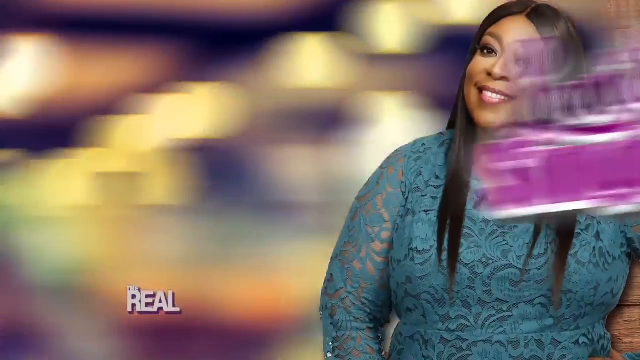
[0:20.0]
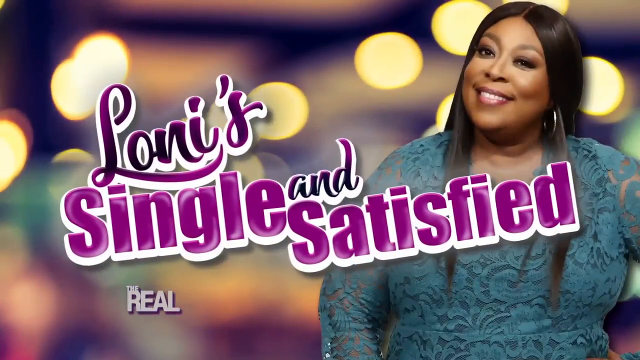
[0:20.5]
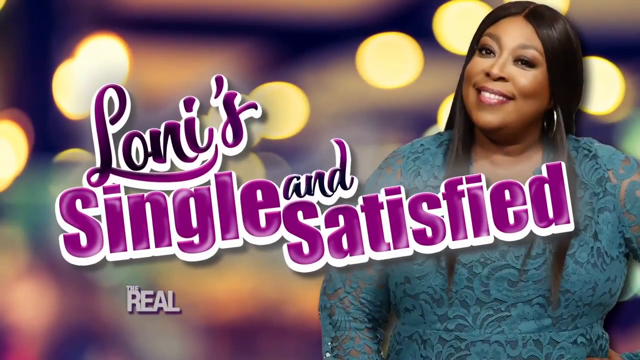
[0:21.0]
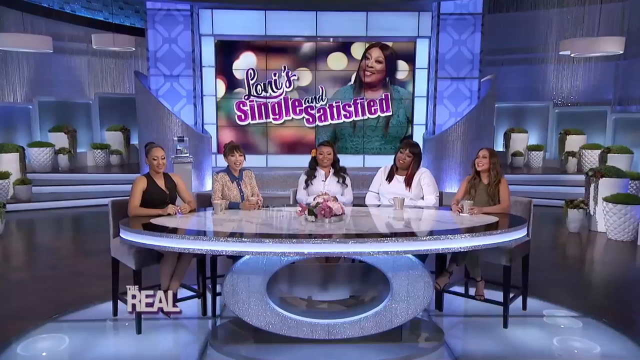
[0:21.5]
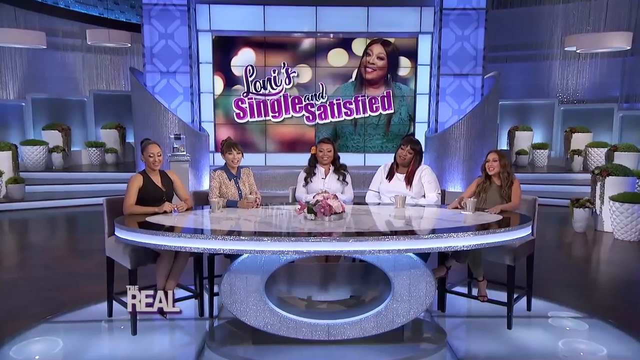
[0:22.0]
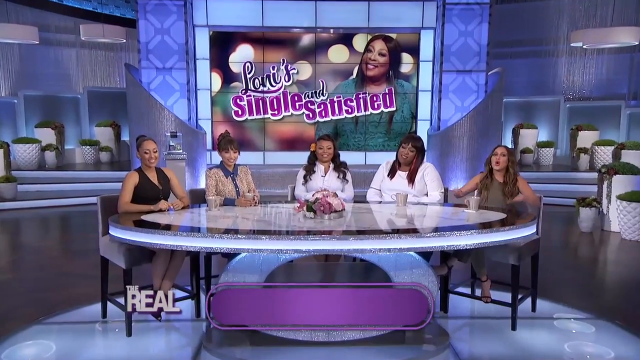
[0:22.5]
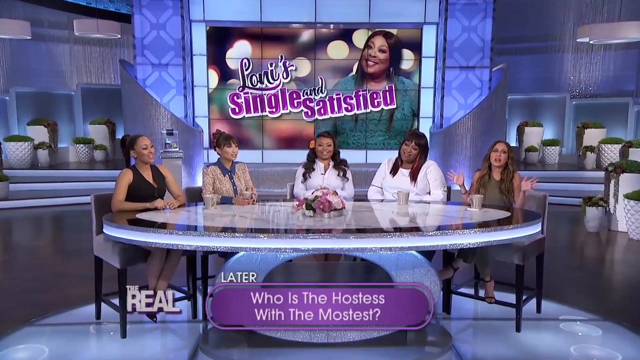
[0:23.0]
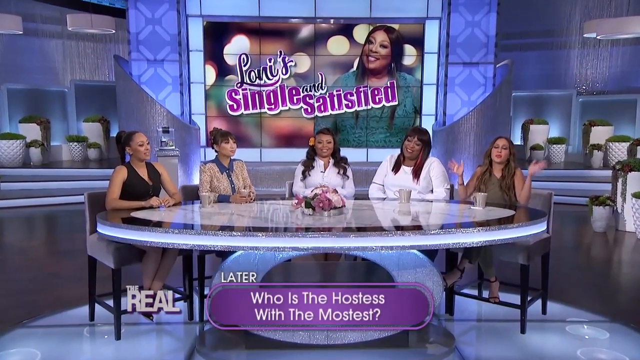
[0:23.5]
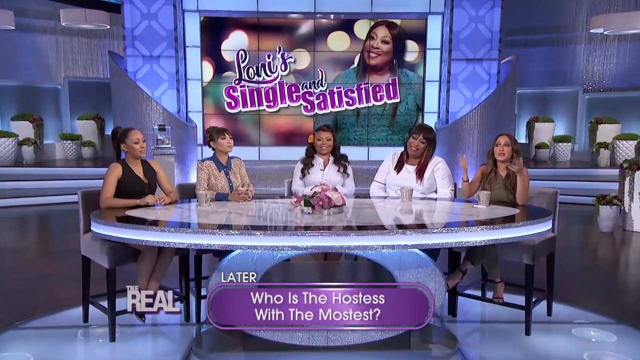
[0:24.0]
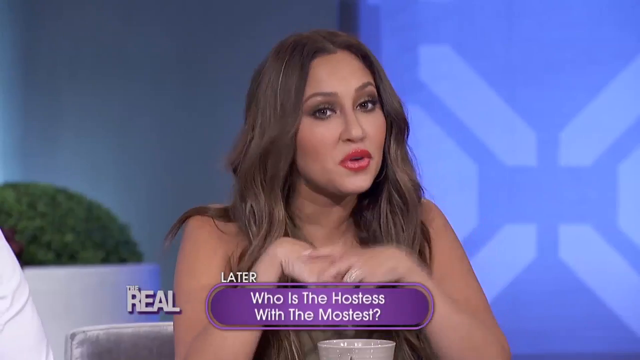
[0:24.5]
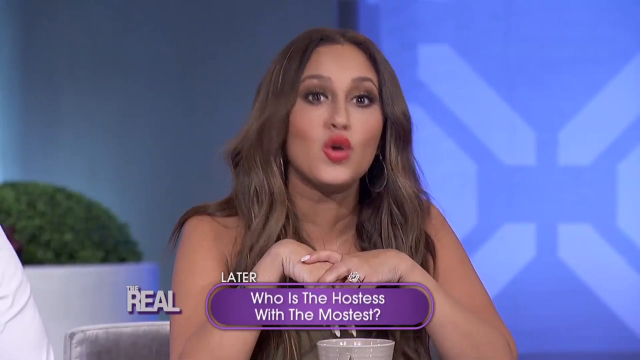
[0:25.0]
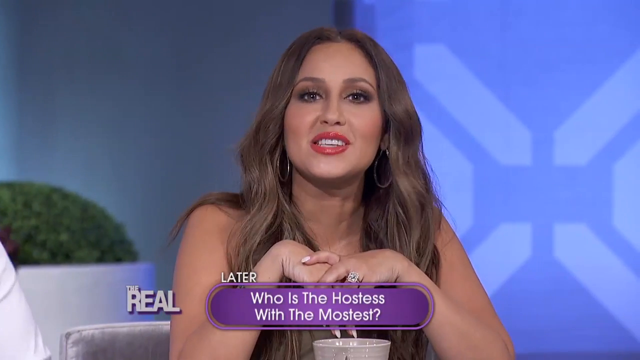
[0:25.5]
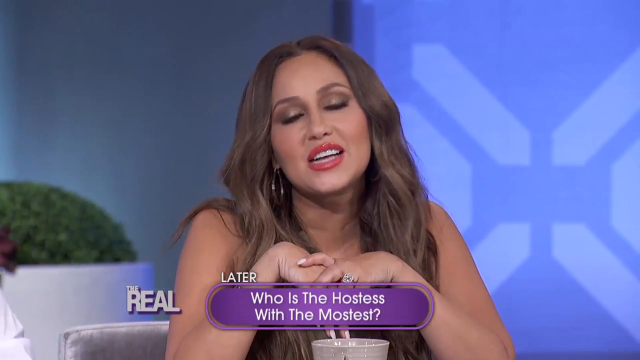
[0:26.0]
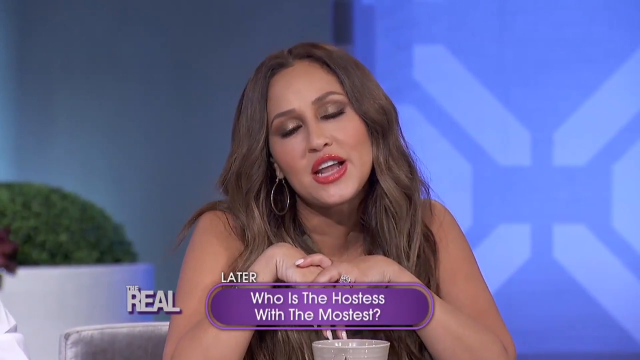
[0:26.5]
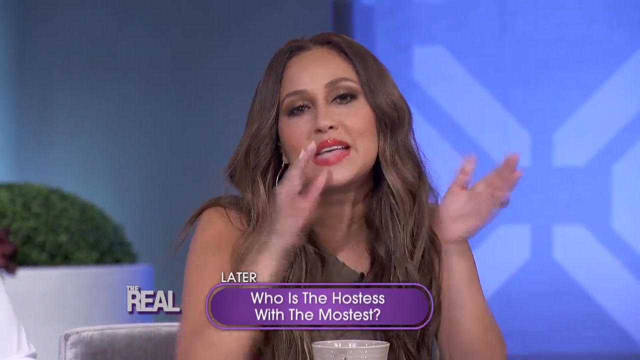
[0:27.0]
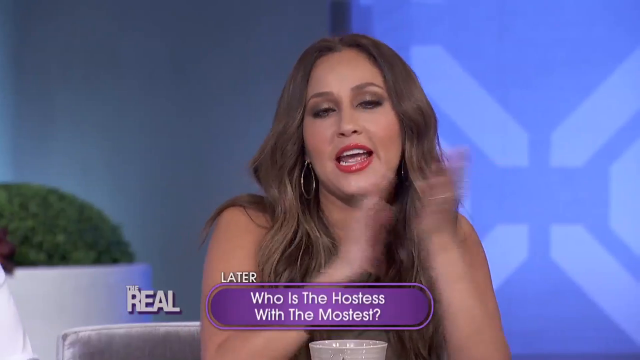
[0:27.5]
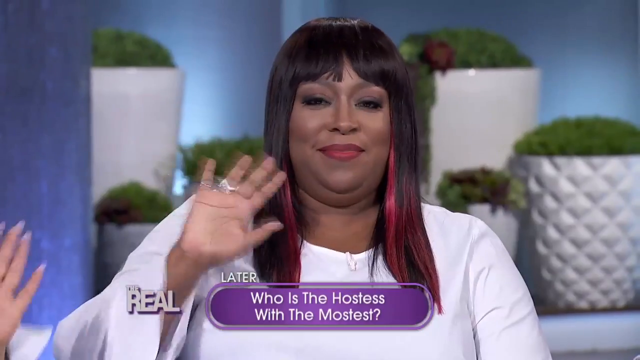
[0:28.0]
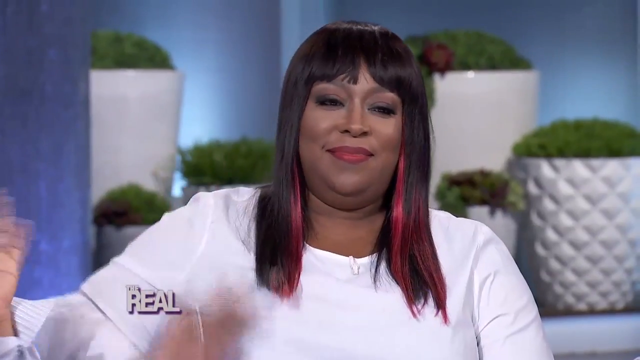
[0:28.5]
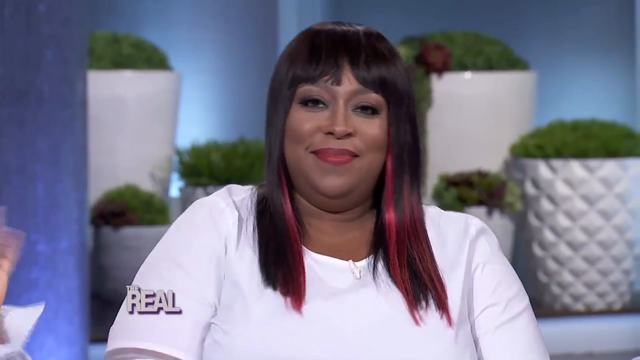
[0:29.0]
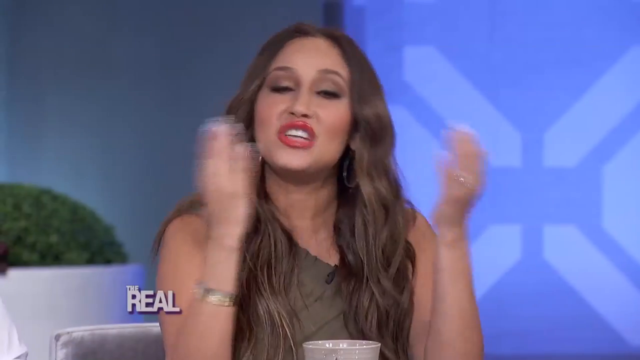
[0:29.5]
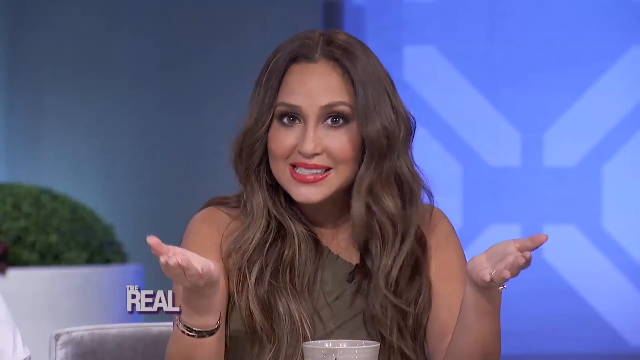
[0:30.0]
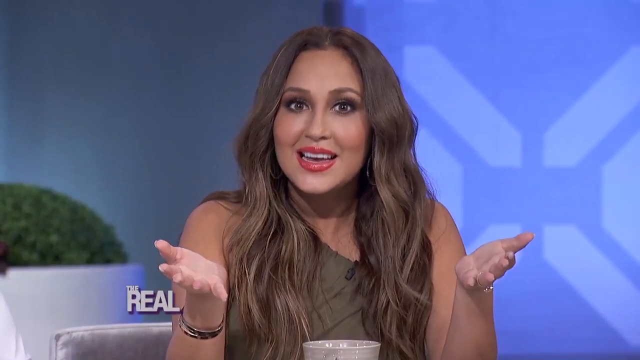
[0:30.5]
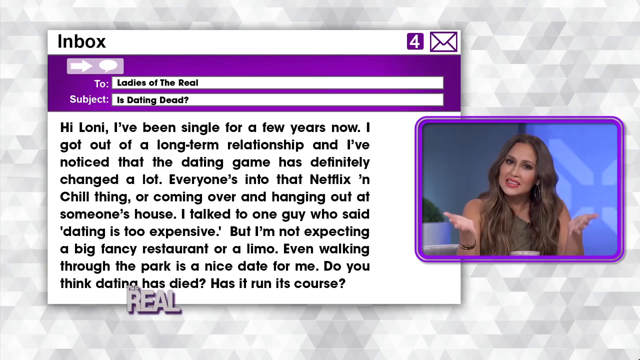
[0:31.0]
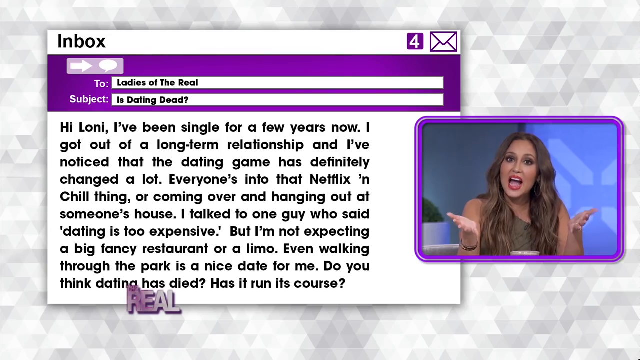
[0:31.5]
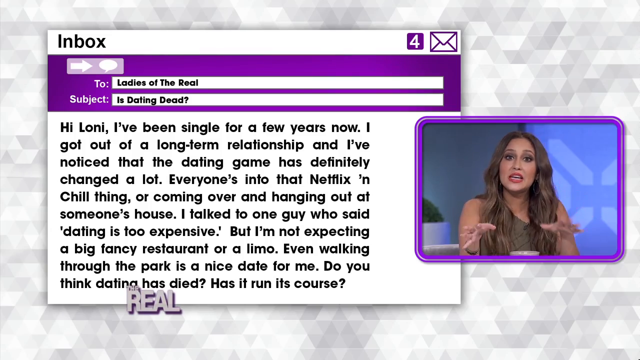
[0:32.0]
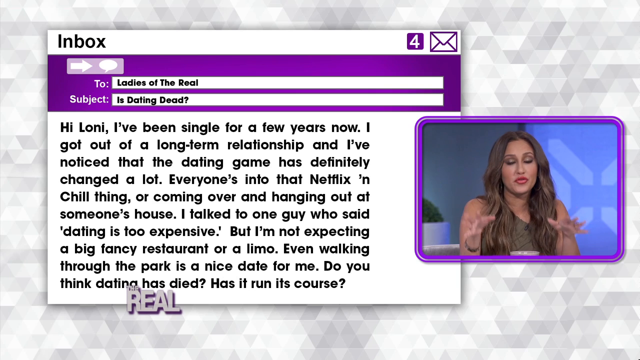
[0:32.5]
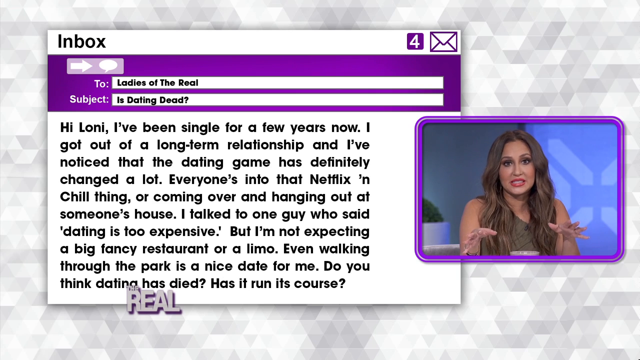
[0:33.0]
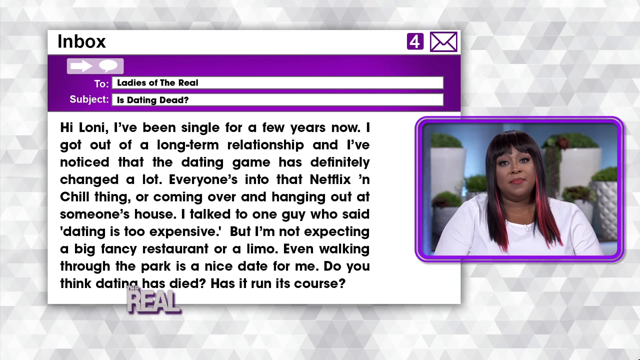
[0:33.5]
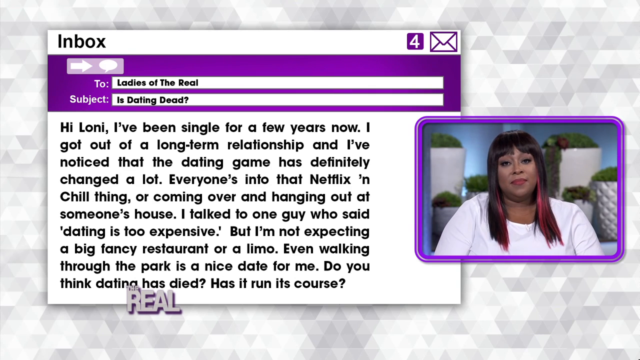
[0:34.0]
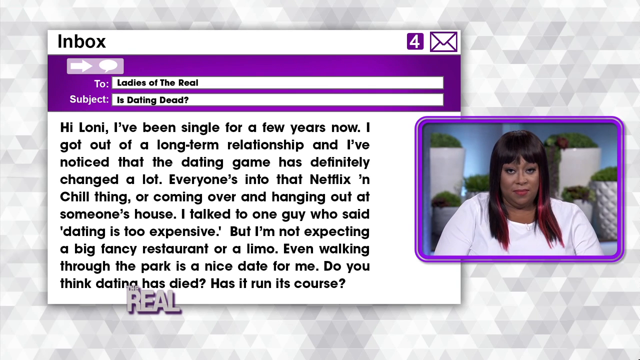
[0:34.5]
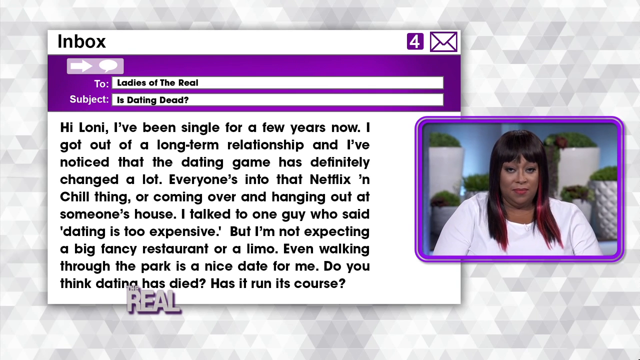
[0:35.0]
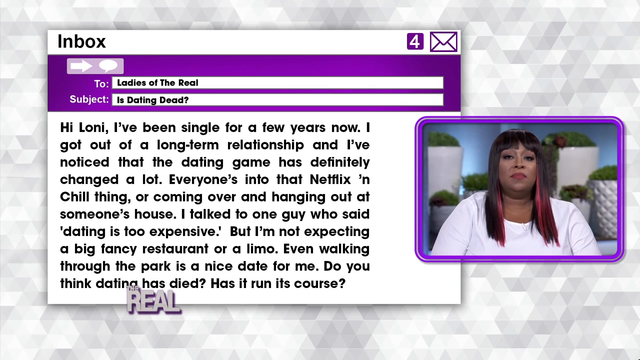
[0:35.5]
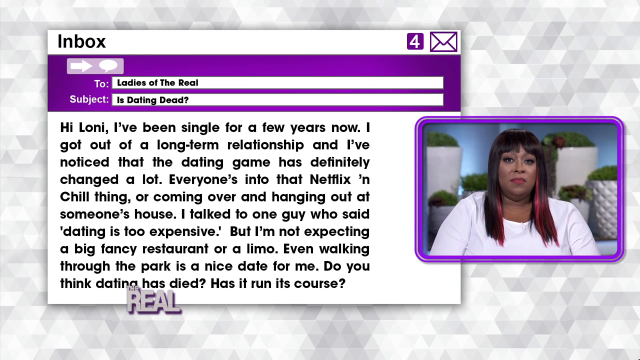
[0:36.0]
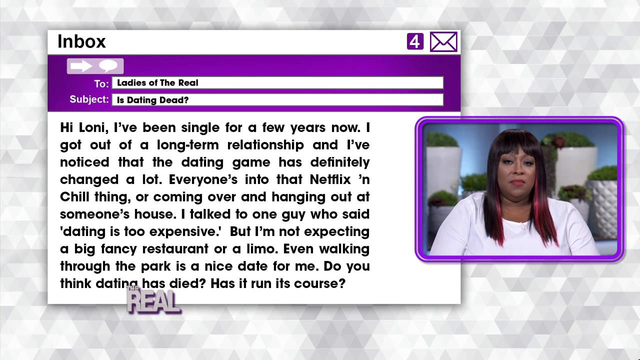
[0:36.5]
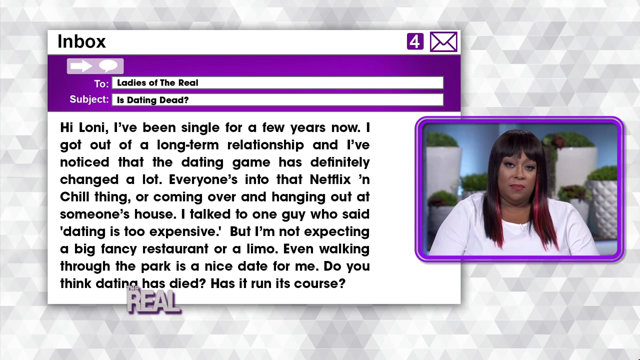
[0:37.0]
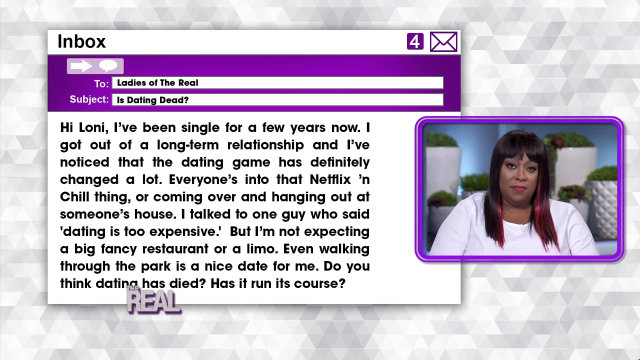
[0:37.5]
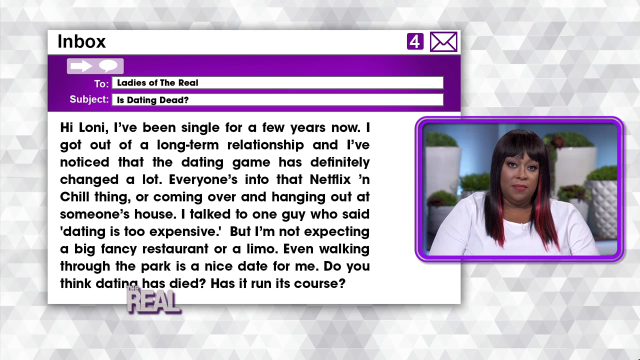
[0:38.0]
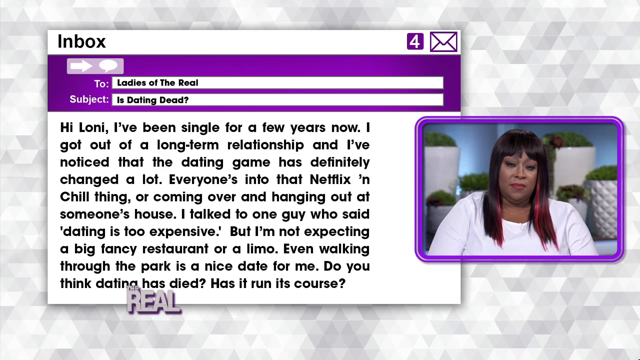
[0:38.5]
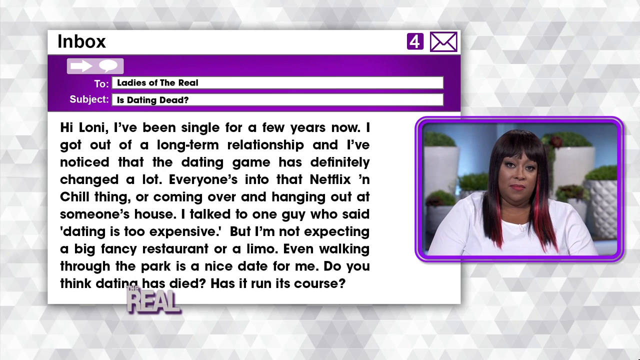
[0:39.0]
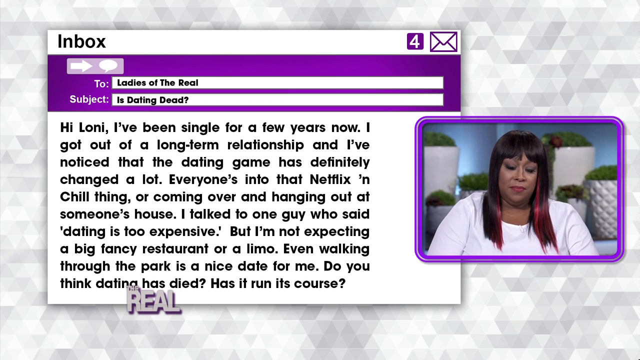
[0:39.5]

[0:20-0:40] The woman appears on the right side of the frame in a static image. She is a larger woman with dark brown hair pinned straight with a middle part, and she wears a full face of makeup: eyeshadow around her eyes and apparently some sort of eyeliner and mascara. Her dark teal top has long sleeves and sort of a lace pattern on top. There are some sort of lights in the background, and in front is purple text that says "Lonnie's single and satisfied". Next, a round table is in the center of the frame in what looks like some sort of filming studio, with five women sitting around half of the table. The first woman, on the very left, has dark brown hair pulled back into a bun and wears a sleeveless black top with sort of a neck cowl; both of her arms rest on the table. Beside her, a woman has her hair in some sort of bun with bangs and wears a long-sleeve button-up shirt that appears to be white with some kind of brownish pattern, with blue accents on the collar, buttons and wrist cuffs. To her right is a woman with black hair worn down and curled, with what might be a flower on the right side of her head, wearing a long-sleeve white shirt with a collar. Next is a woman with straight black hair just below shoulder length, also in a long-sleeve white shirt. On the right is a woman with dark brown hair that appears to have a bit of a wave, wearing a sleeveless top in kind of an olive, greenish brown. The woman on the very right begins speaking, and the camera zooms in on just her, so she is in the center of the frame; she speaks directly to the camera and claps her hands together. The camera then shows the woman in the white long-sleeve shirt with straight black hair, revealing pink highlights toward the ends of her hair; she smiles and waves directly at the camera. It goes back to the woman with the wavy dark brown hair, who speaks animatedly to the camera. Her image then becomes smaller on the screen, with a digital image of an email in the background, and she appears to be discussing the email.